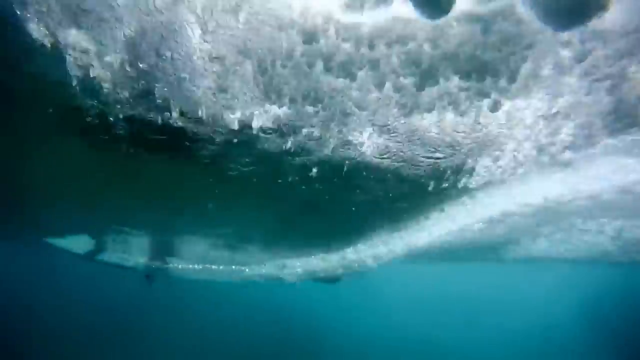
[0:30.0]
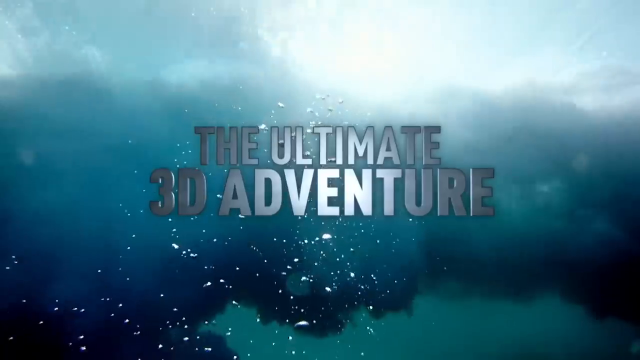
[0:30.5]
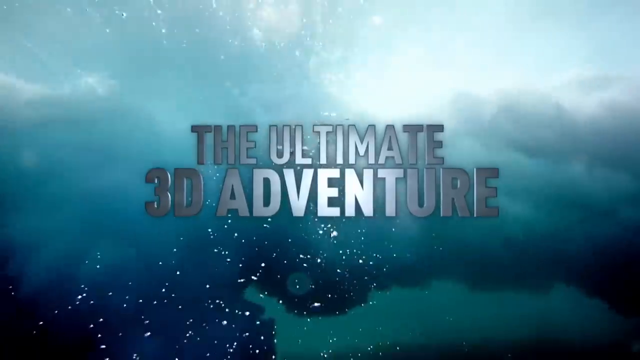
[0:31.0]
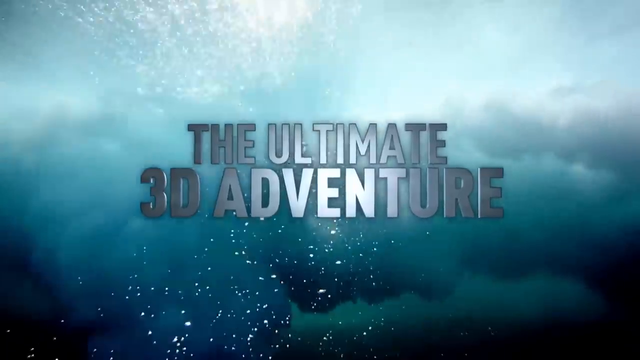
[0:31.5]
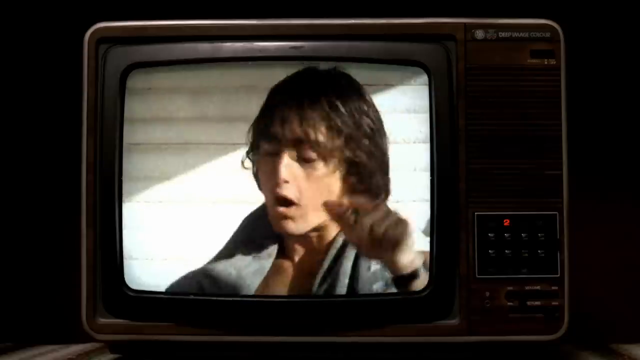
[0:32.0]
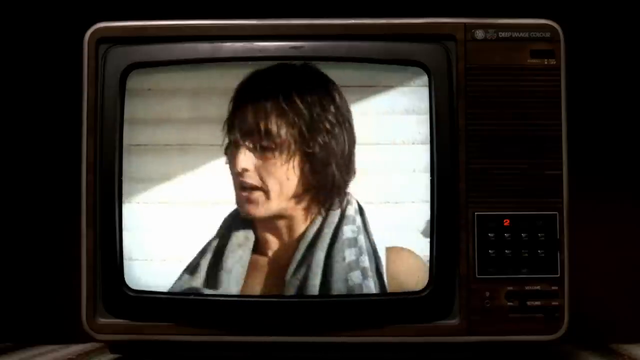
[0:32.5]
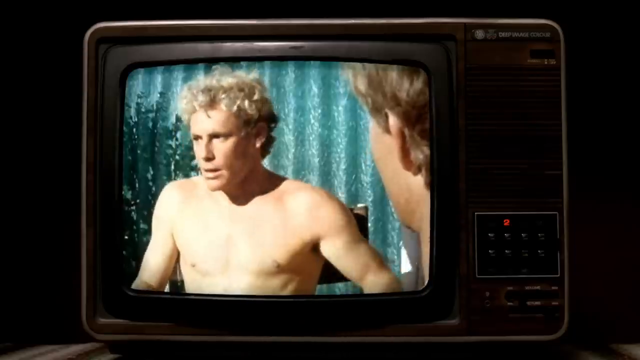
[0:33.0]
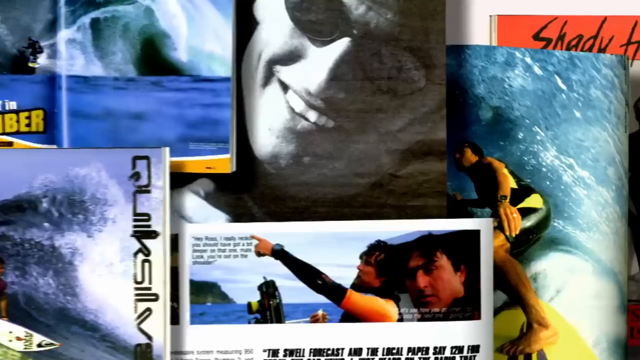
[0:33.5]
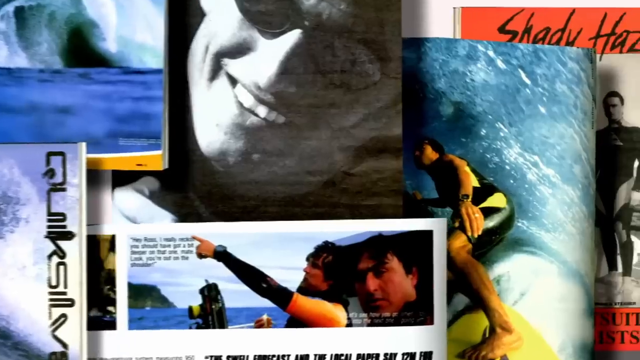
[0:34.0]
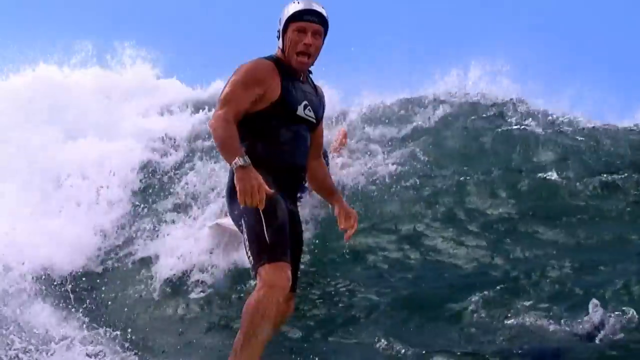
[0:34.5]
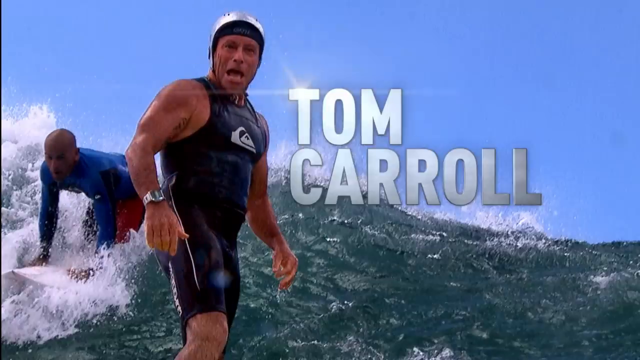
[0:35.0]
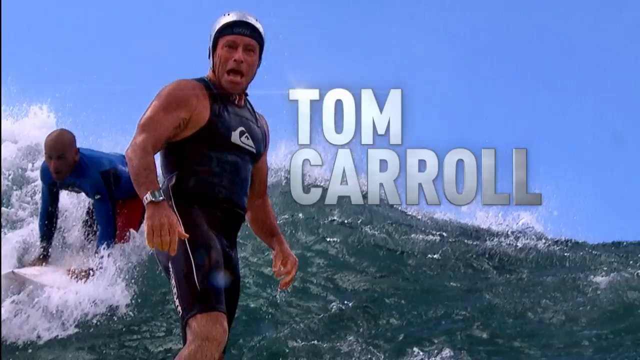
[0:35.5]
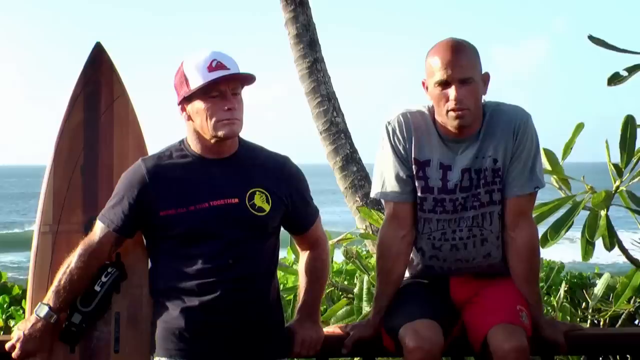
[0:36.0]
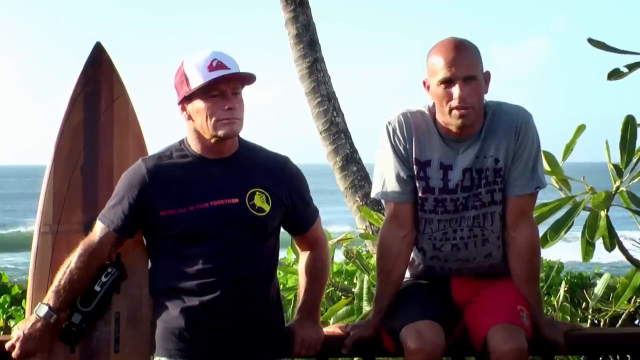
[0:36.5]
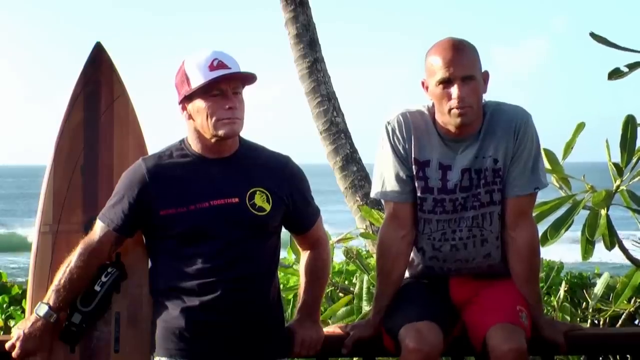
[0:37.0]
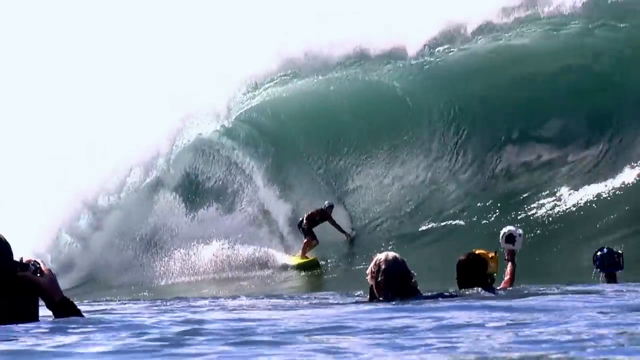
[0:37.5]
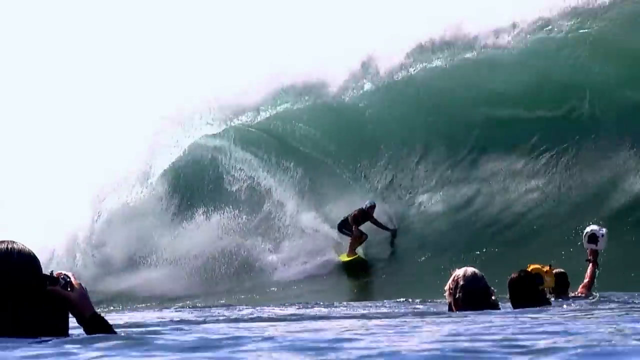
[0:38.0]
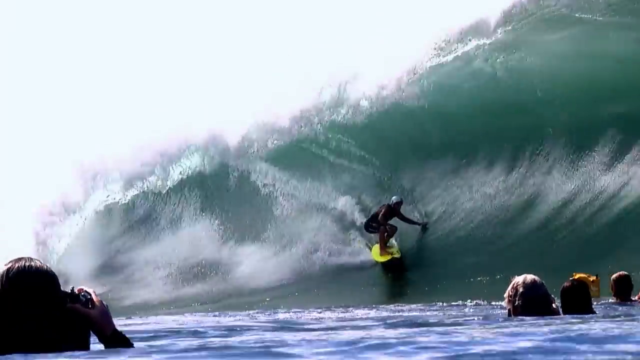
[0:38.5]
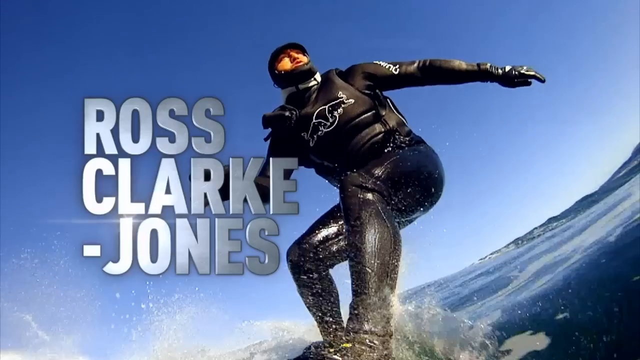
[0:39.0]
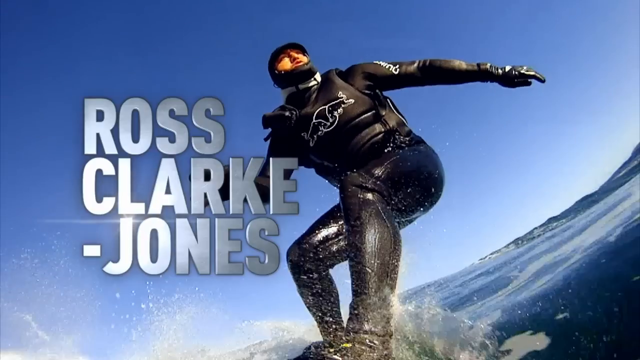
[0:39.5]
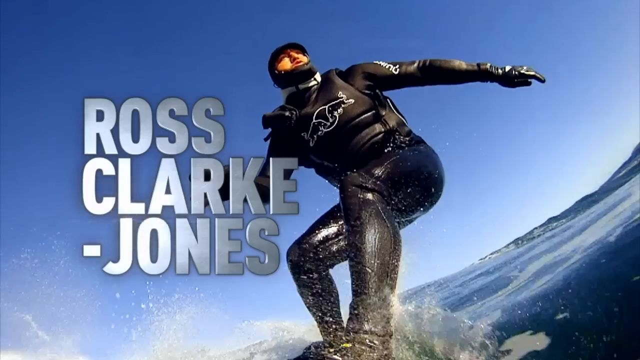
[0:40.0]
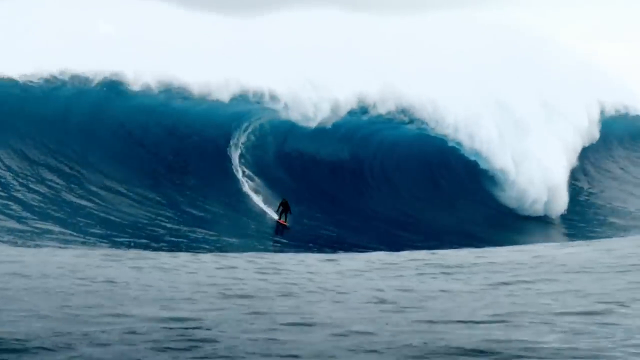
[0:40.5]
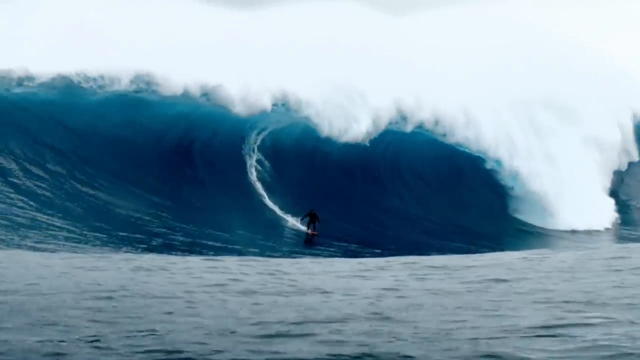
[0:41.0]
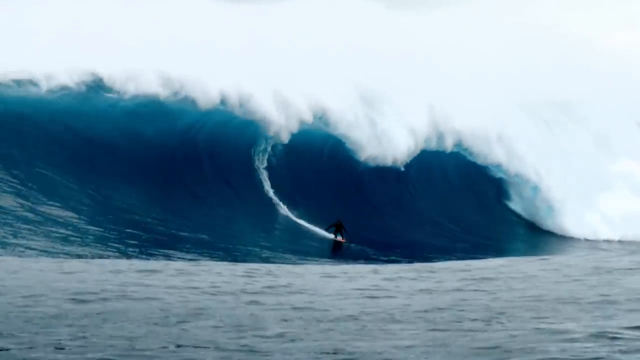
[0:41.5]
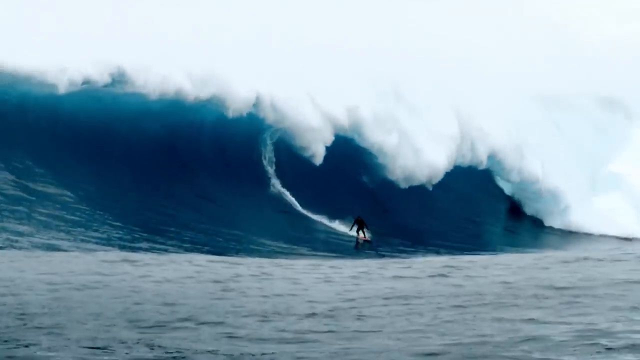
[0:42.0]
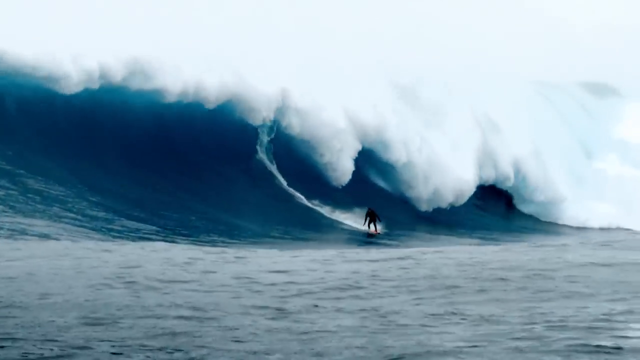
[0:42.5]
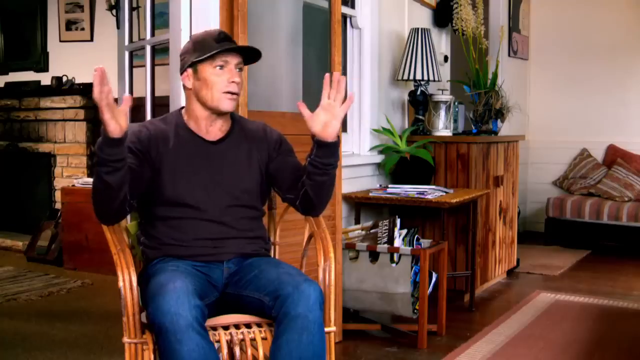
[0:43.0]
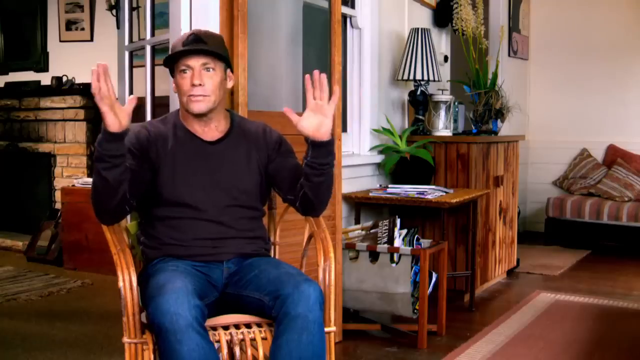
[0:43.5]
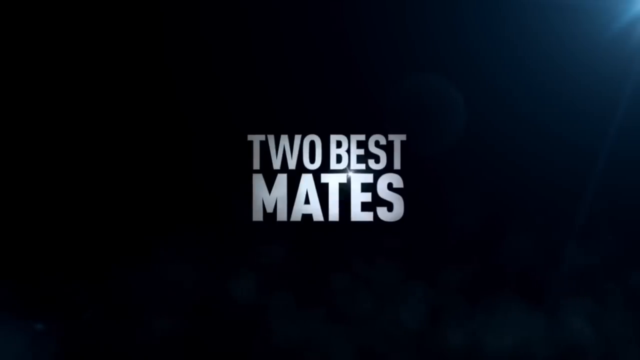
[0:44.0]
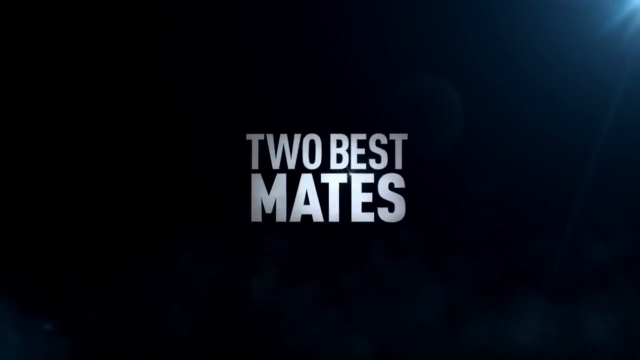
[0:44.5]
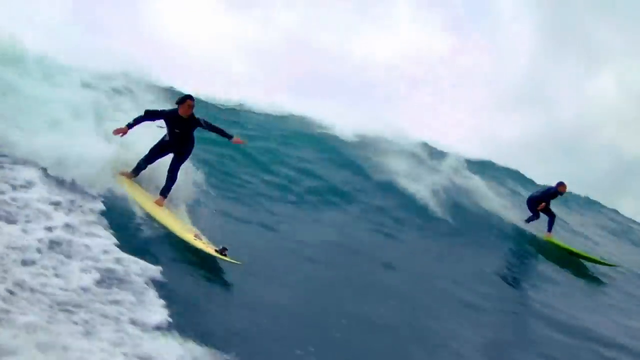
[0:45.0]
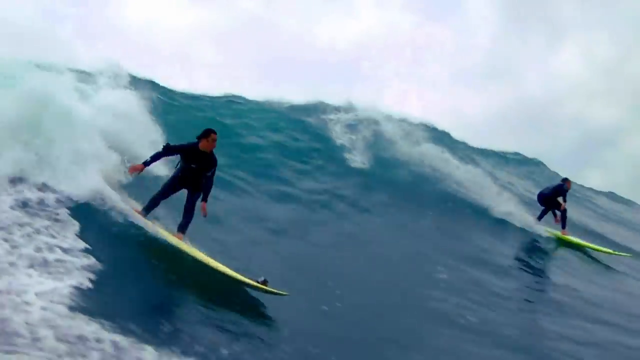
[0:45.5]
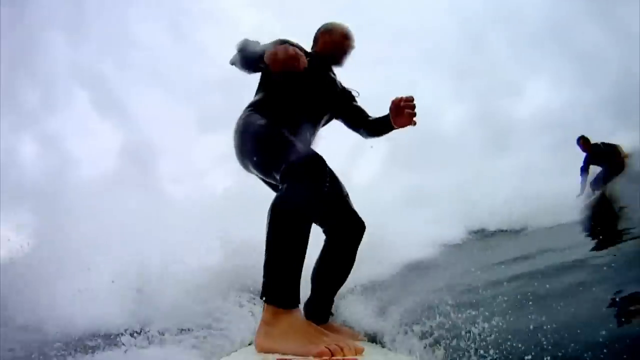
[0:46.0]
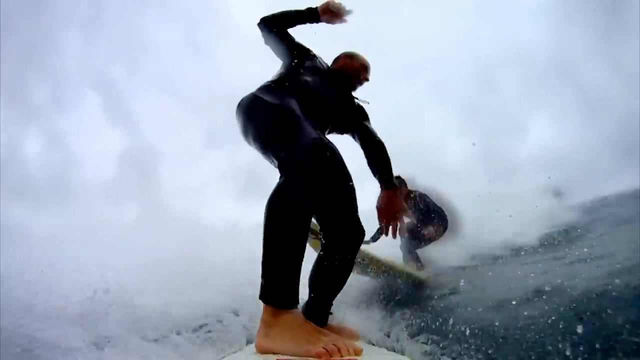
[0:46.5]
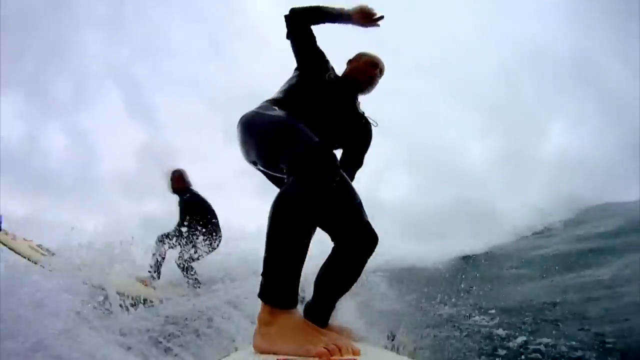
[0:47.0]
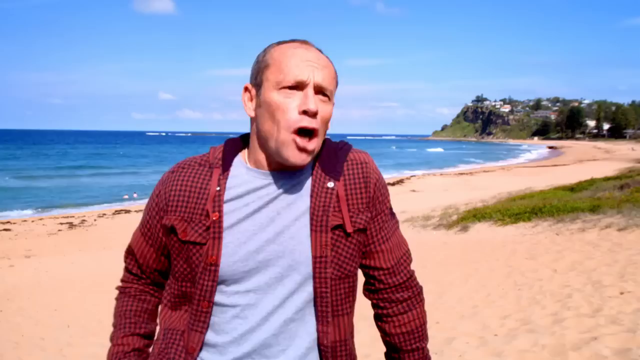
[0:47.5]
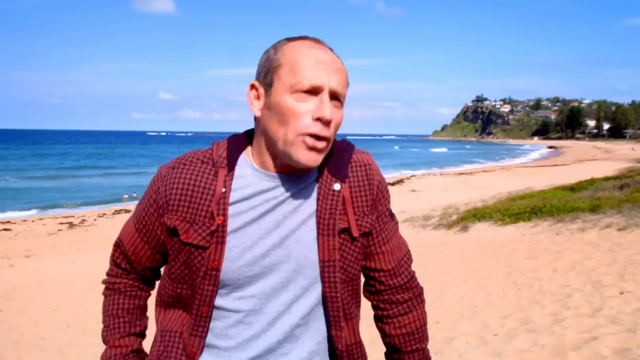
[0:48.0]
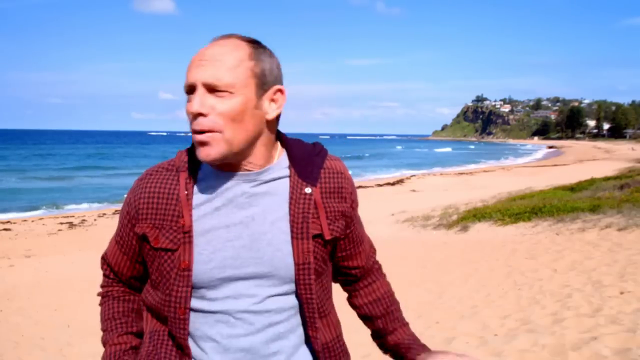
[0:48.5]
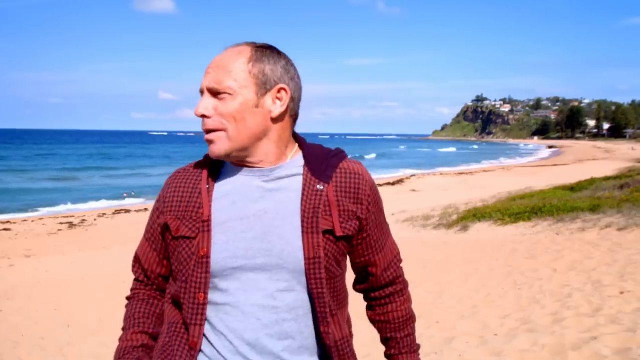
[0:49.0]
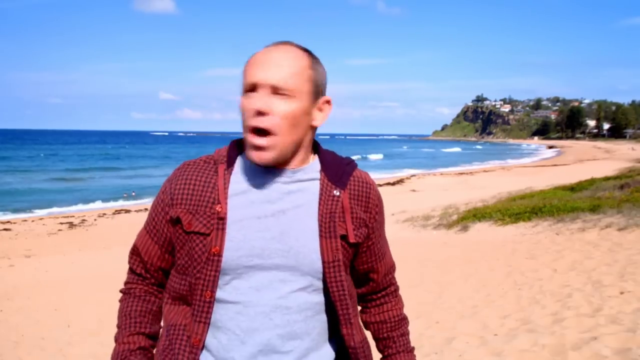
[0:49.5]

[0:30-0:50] A number of different people are shown, and on-screen text reads "Tom Carroll" as Tom Carroll surfs. Text then reads "Ross Clark-Jones," who is also riding the waves. All of these people ride the waves, and some of them talk with each other. It is broad daylight, so everything is clearly visible. The people surf very large waves, staying ahead of the waves before they can crash onto them.